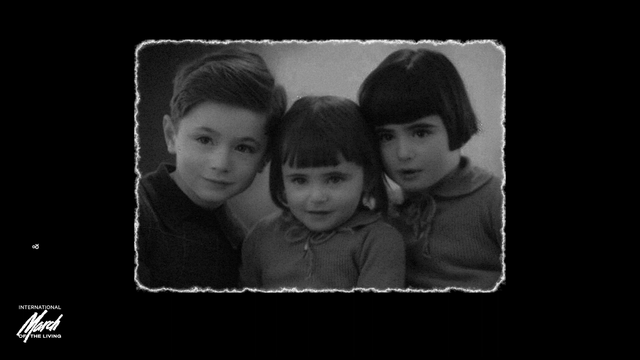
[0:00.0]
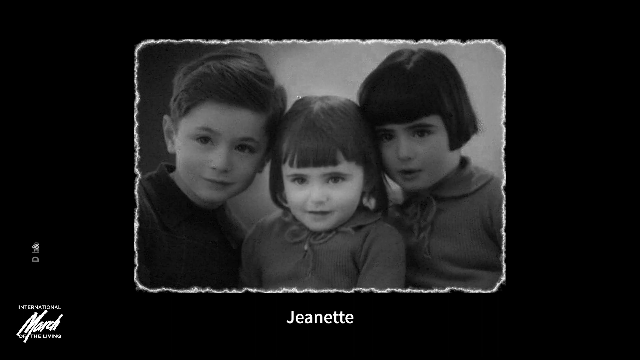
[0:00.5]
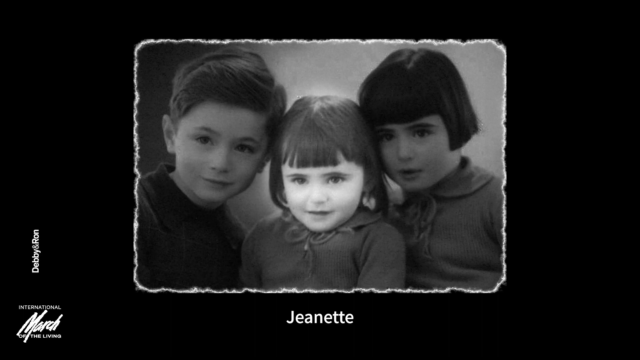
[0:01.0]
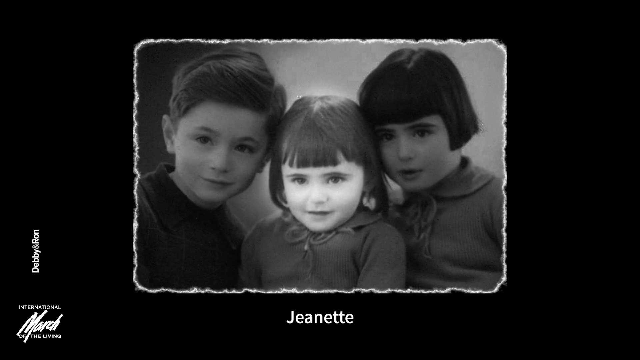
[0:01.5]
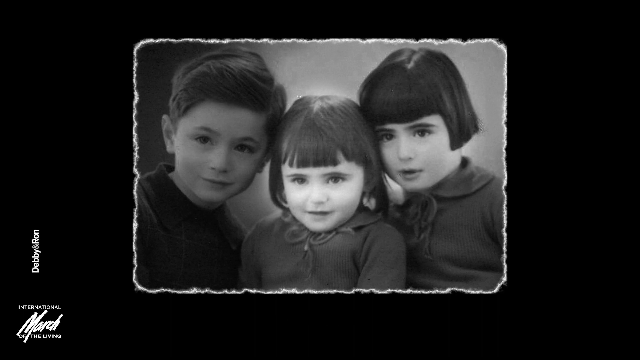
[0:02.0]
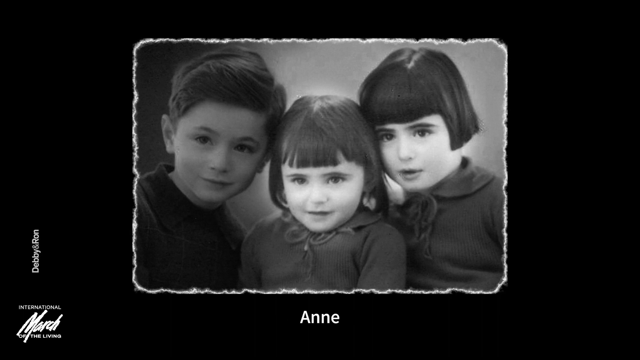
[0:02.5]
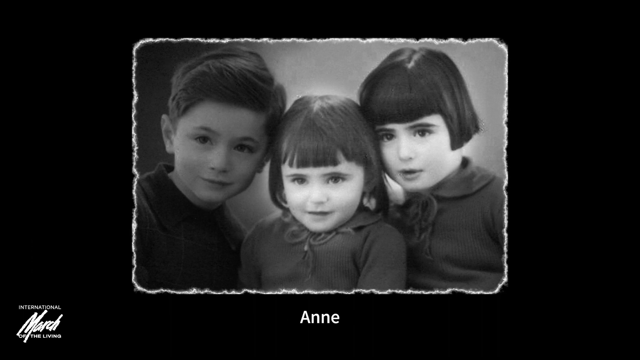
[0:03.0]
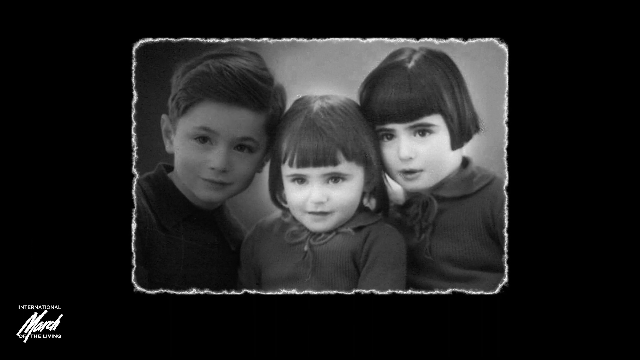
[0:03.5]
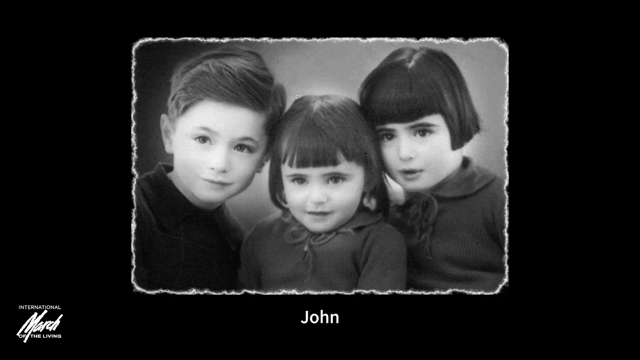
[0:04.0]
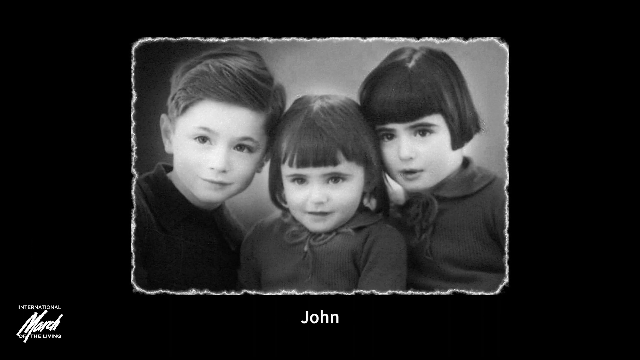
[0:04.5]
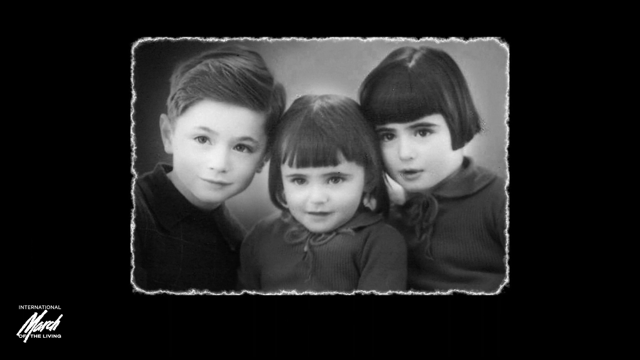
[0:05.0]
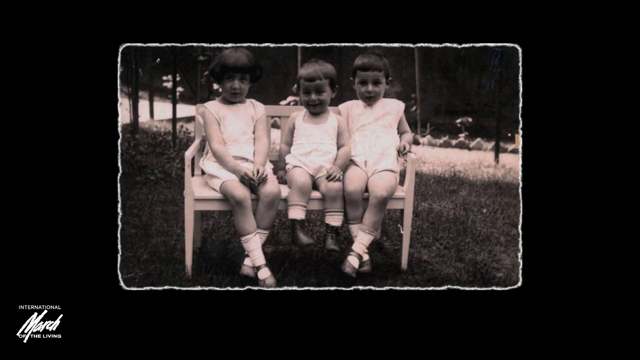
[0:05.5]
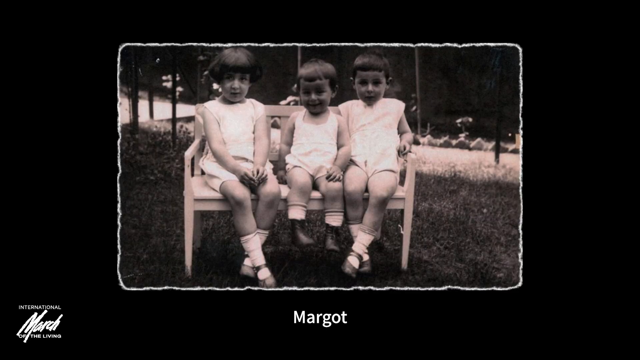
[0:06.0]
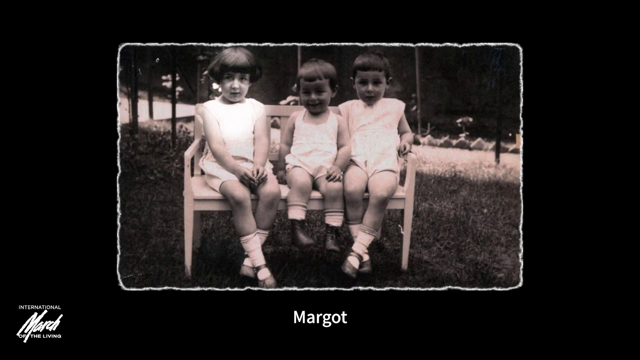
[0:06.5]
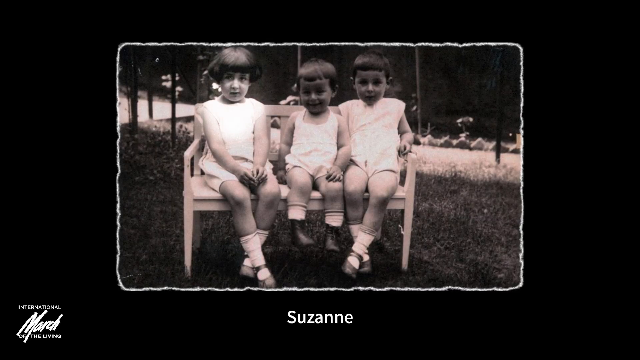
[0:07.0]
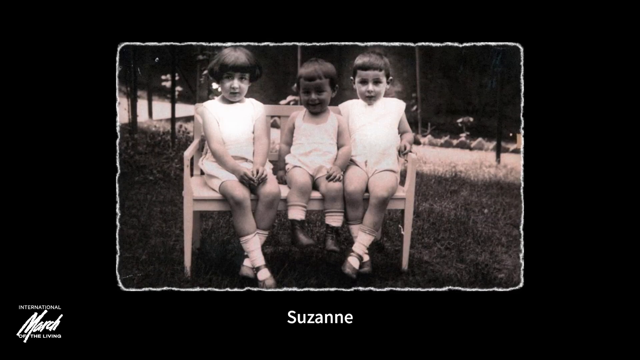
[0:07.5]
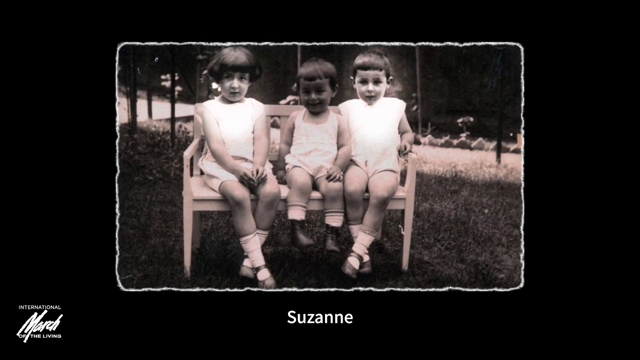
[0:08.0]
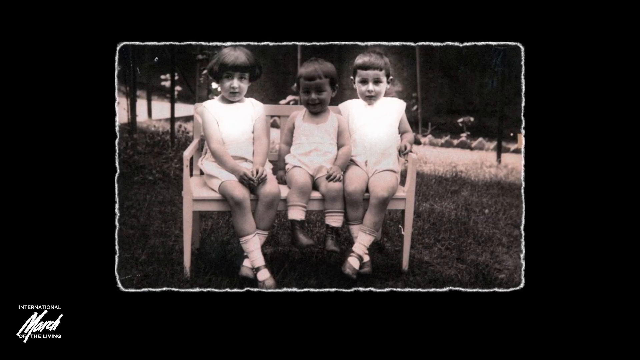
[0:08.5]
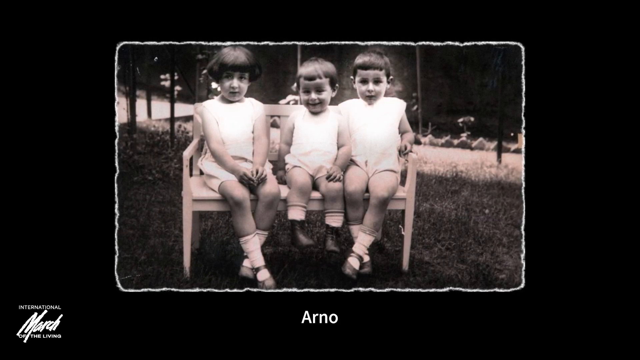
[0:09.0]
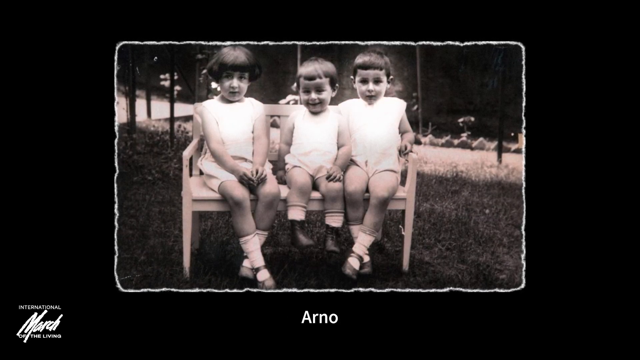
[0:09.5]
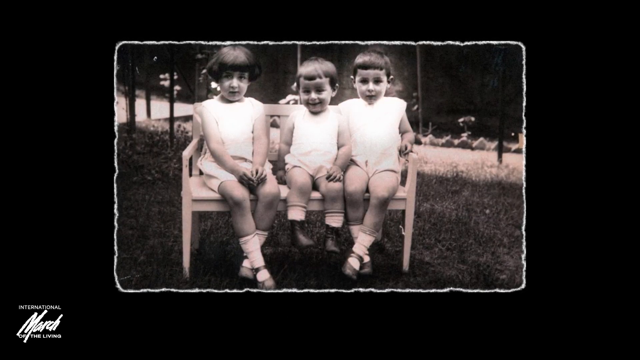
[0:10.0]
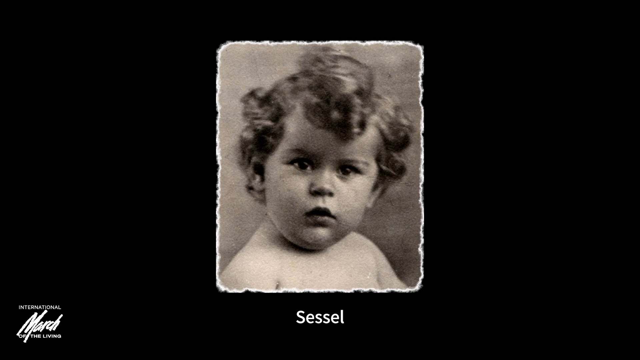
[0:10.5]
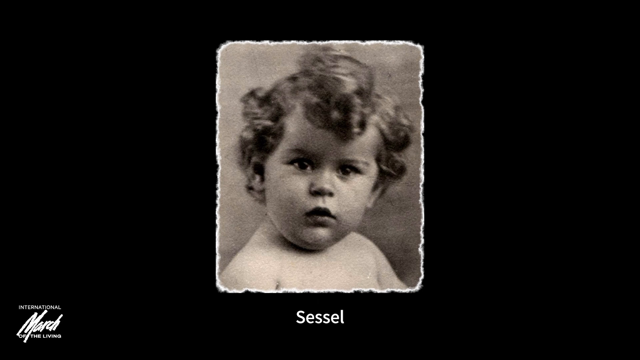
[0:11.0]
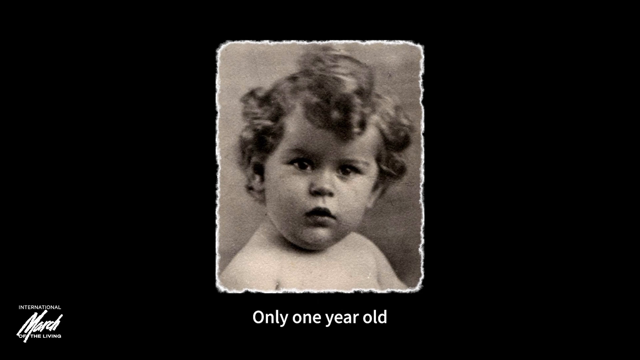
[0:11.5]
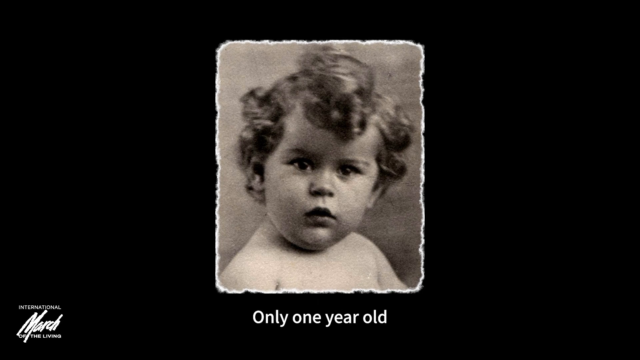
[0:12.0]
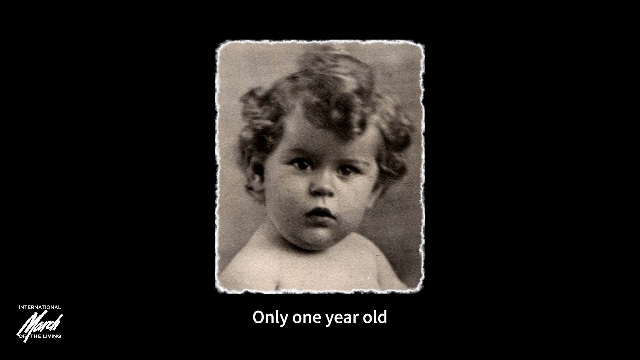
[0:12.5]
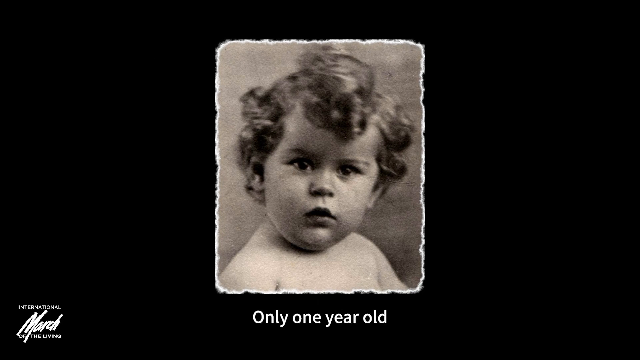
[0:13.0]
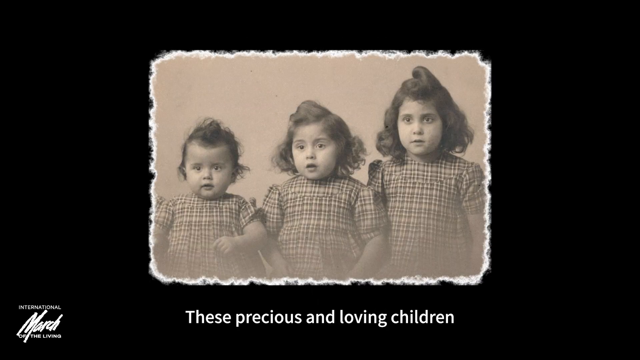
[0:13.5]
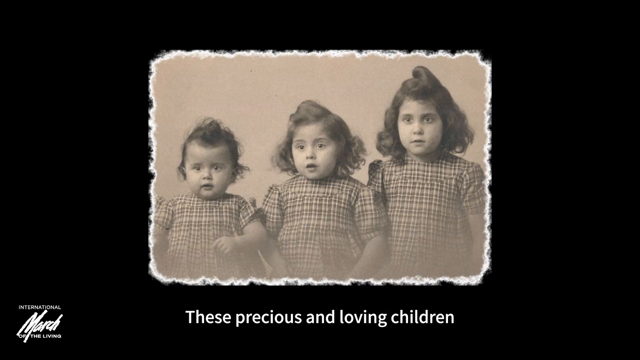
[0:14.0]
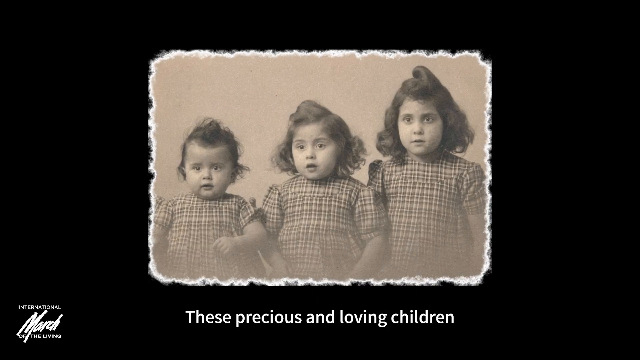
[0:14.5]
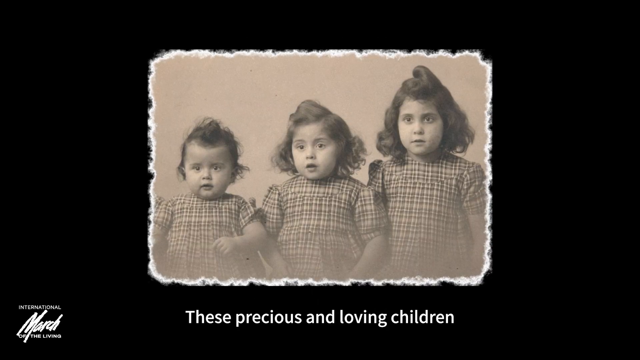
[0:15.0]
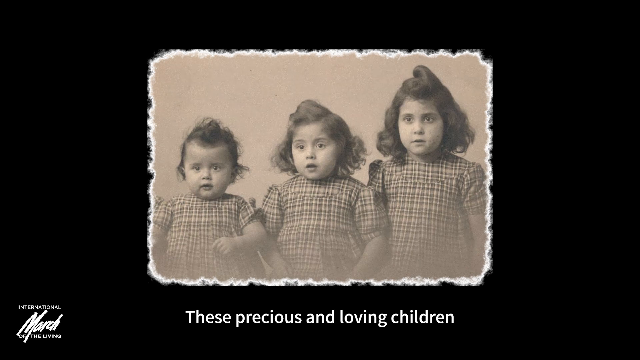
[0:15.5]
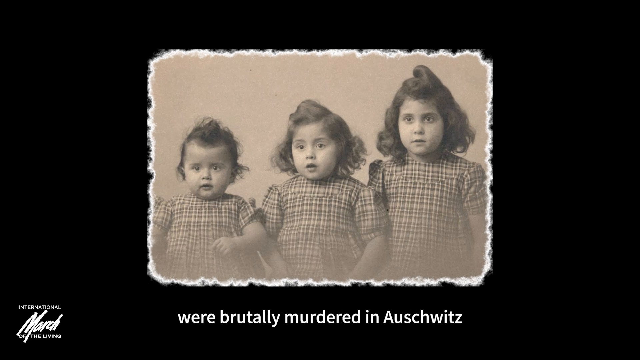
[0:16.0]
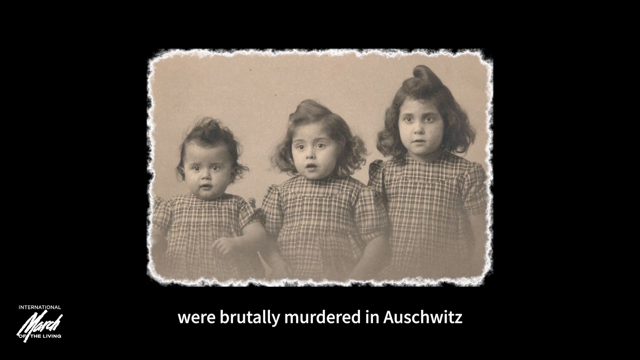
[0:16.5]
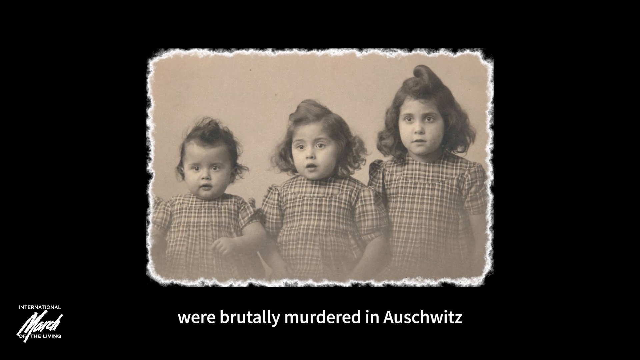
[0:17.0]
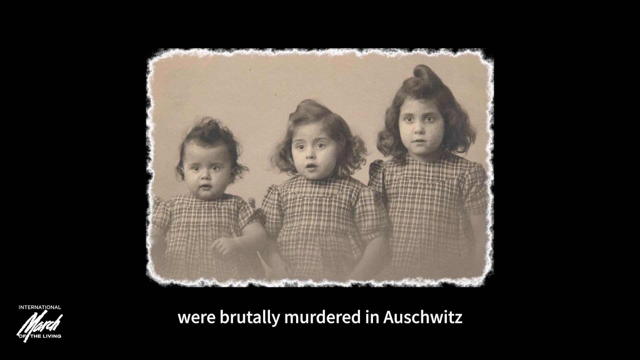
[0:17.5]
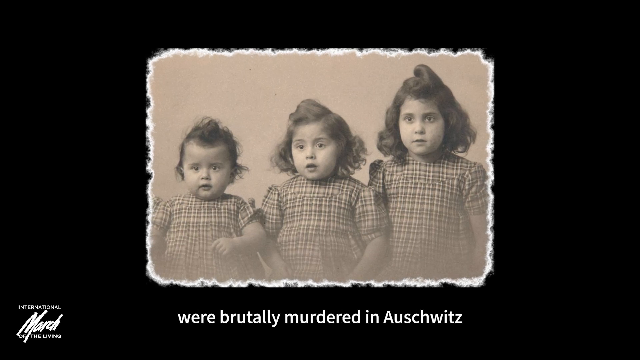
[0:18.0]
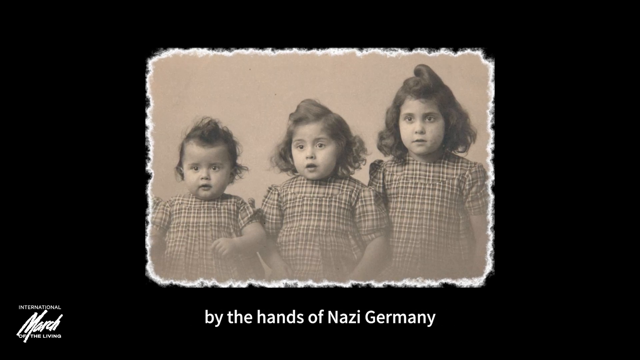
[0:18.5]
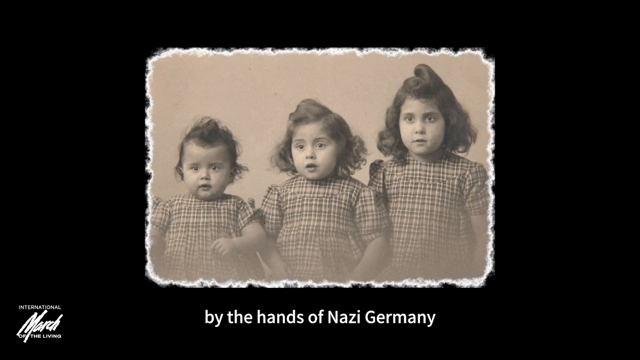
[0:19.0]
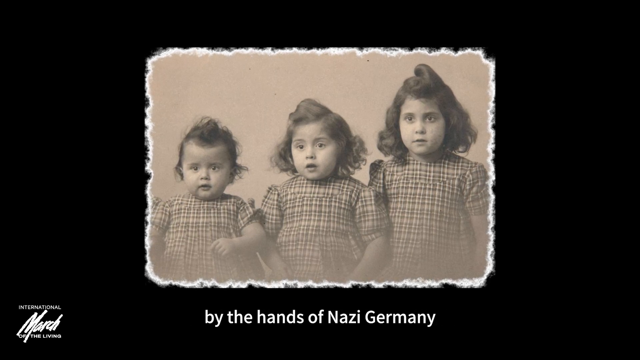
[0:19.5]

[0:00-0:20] A blank white screen appears, with a gradient at the bottom running from black at the very bottom through gray and blending into the white, forming a band about a quarter of the height of the screen. Then, against a black background, a black-and-white photo of three small children is in the center of the screen. A spotlight seems to highlight the face of the girl in the middle, then the slightly older girl to her right, then the little boy to her left, apparently like face recognition software highlighting the faces. The girl in the middle has a dark bob haircut with bangs cut about two centimeters above her eyebrows. The older girl has a similar cut, with hair just long enough to cover her ears. The little boy has his fringe swept to the left side of his face and a side part on the right.